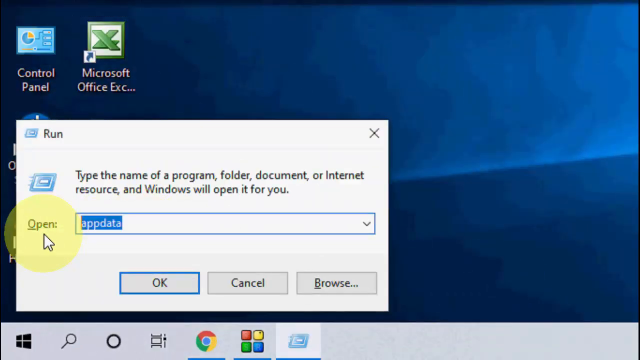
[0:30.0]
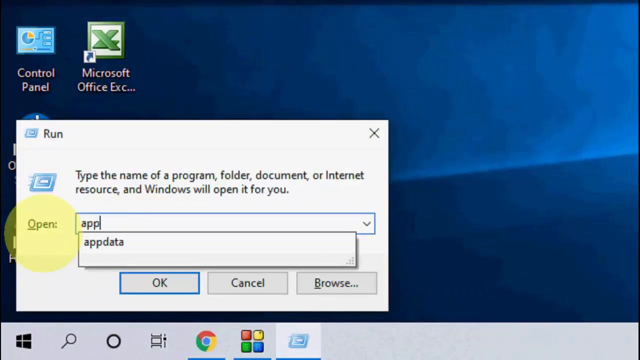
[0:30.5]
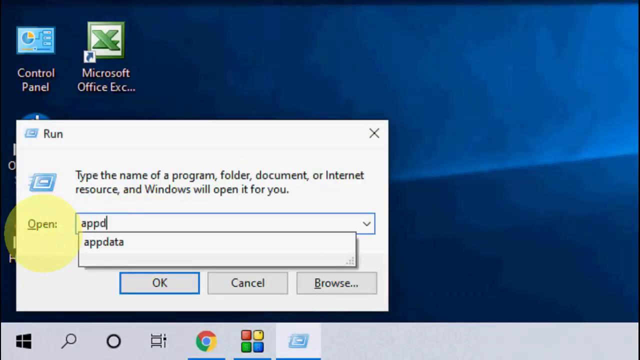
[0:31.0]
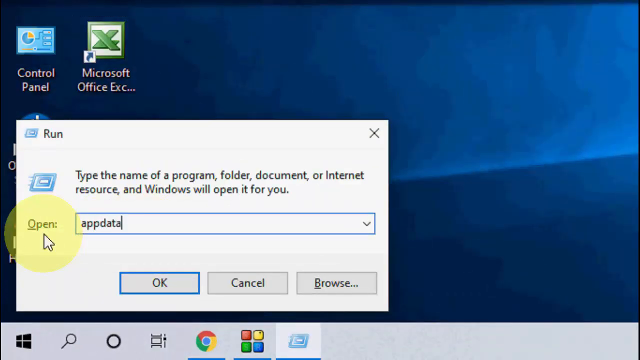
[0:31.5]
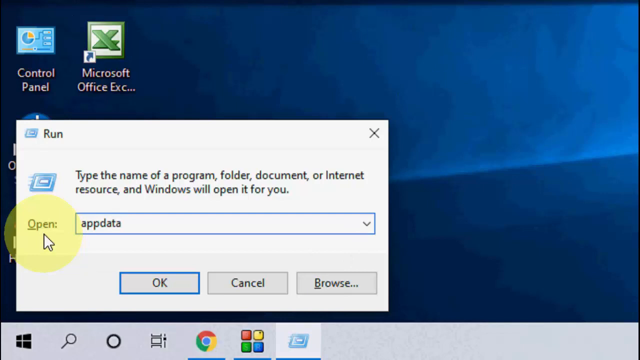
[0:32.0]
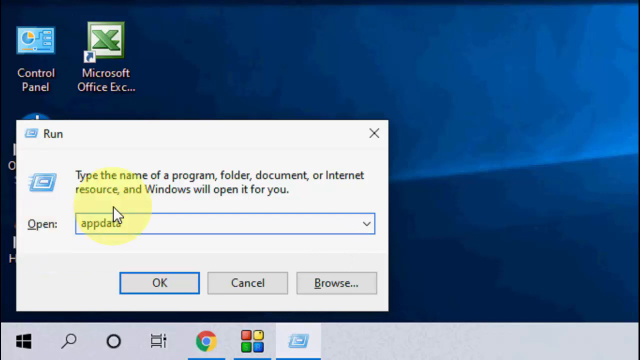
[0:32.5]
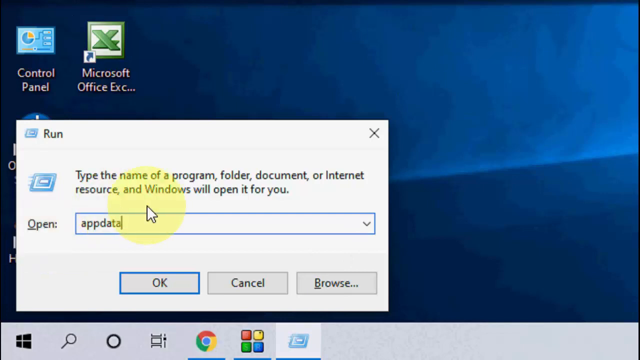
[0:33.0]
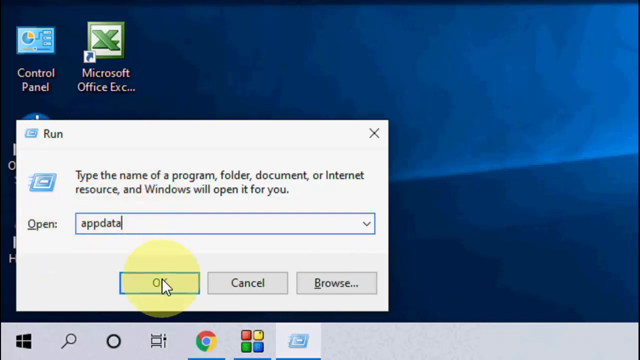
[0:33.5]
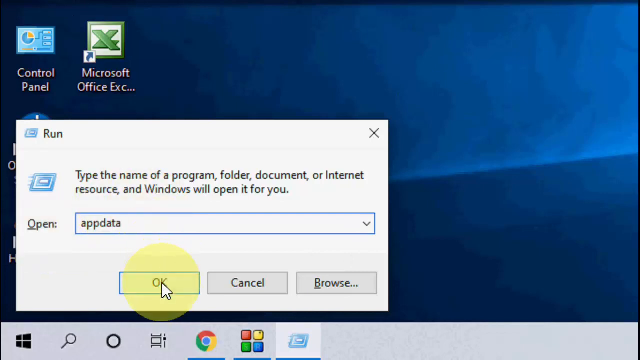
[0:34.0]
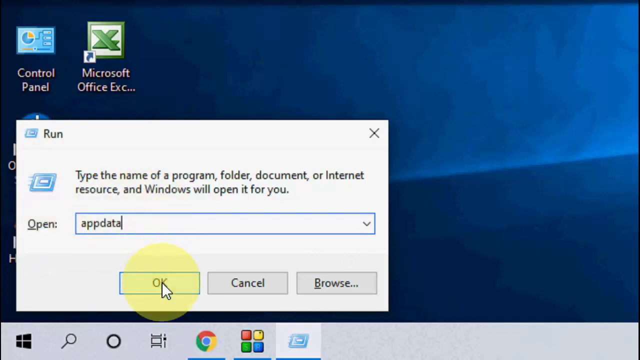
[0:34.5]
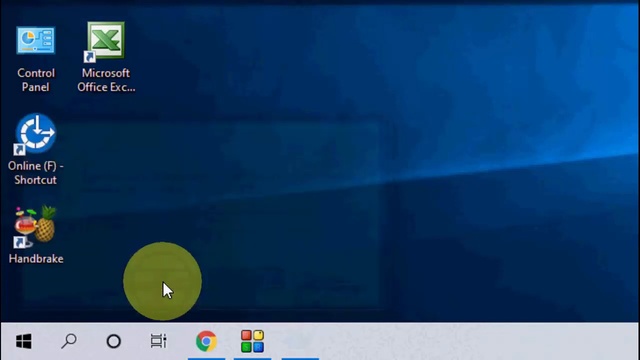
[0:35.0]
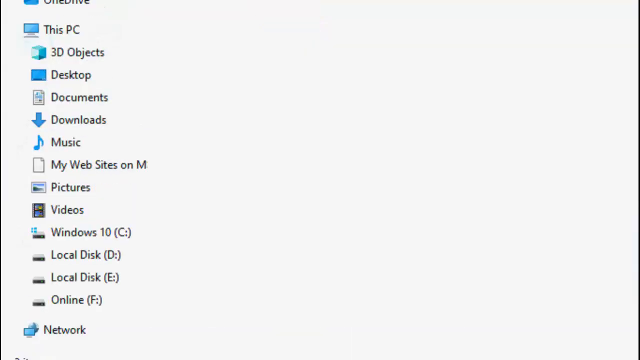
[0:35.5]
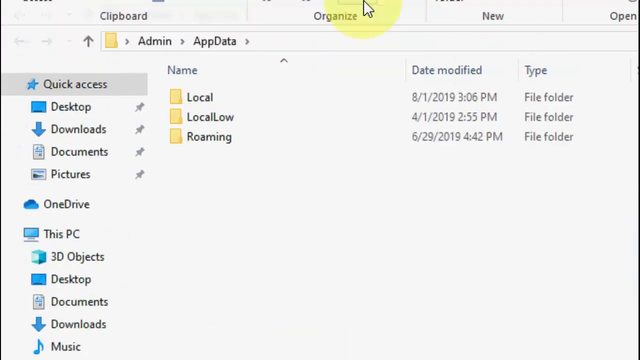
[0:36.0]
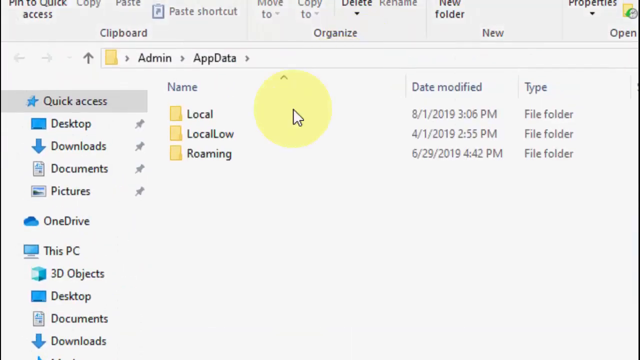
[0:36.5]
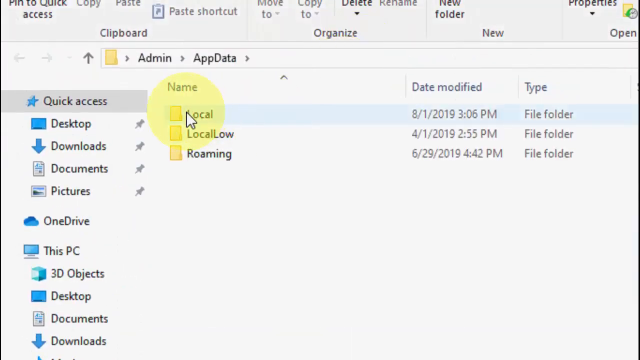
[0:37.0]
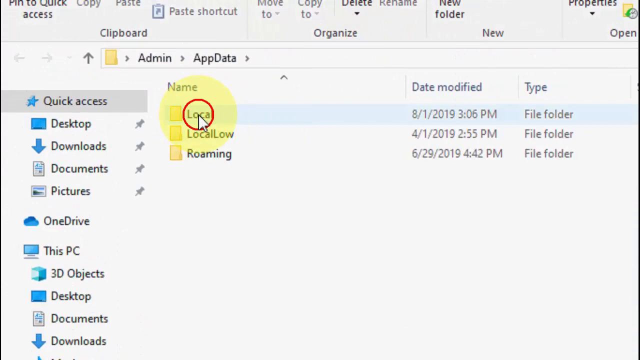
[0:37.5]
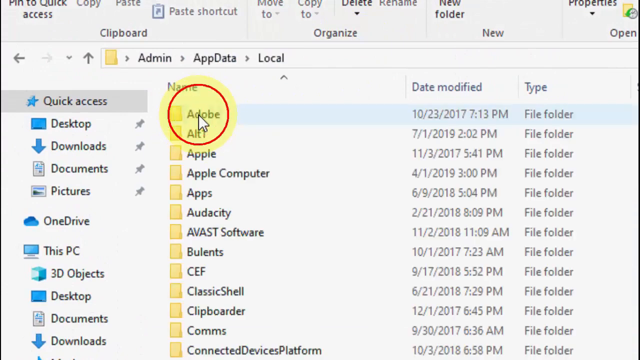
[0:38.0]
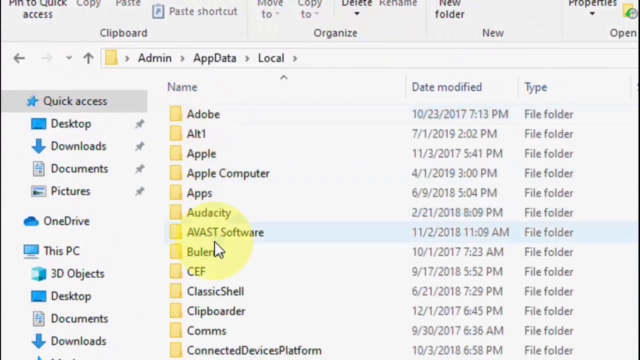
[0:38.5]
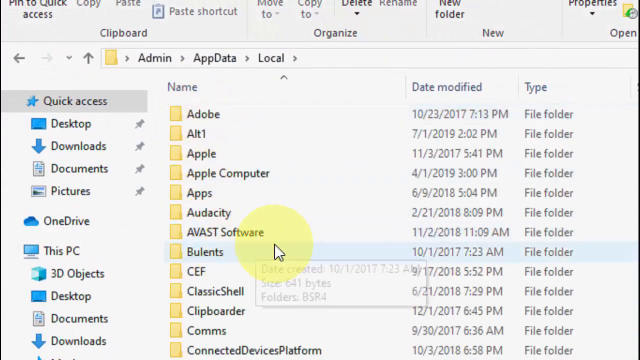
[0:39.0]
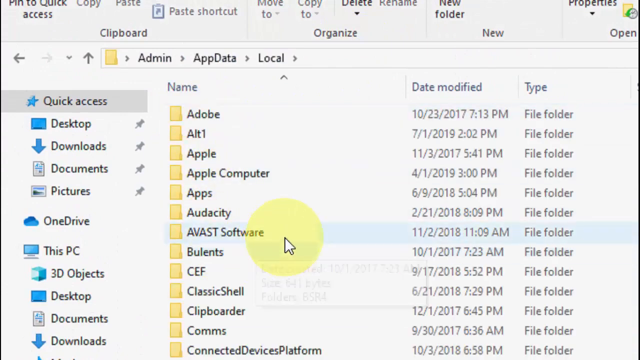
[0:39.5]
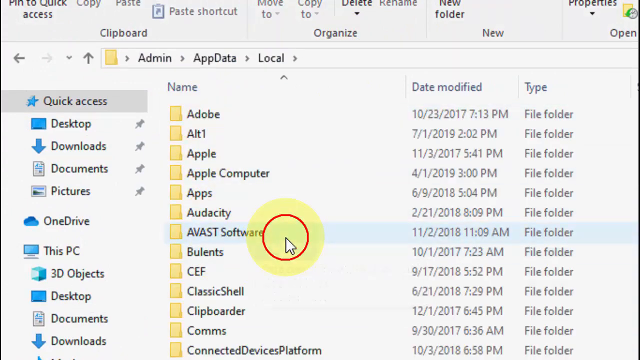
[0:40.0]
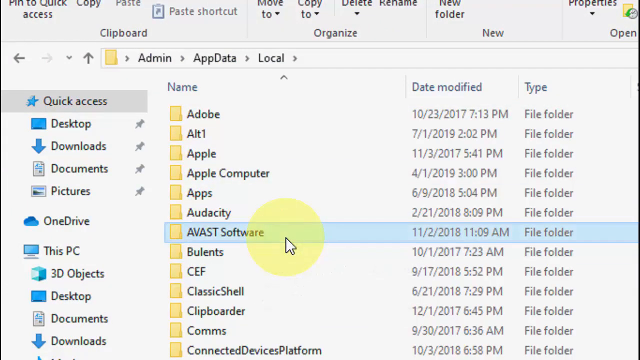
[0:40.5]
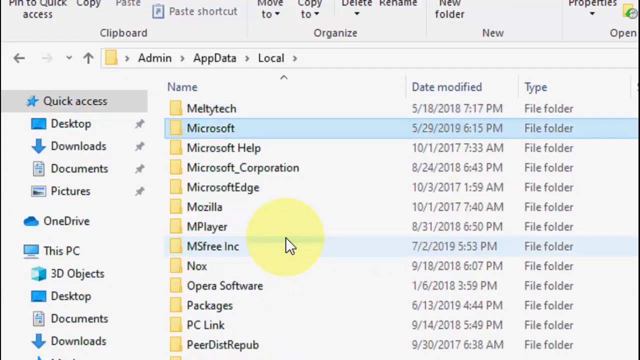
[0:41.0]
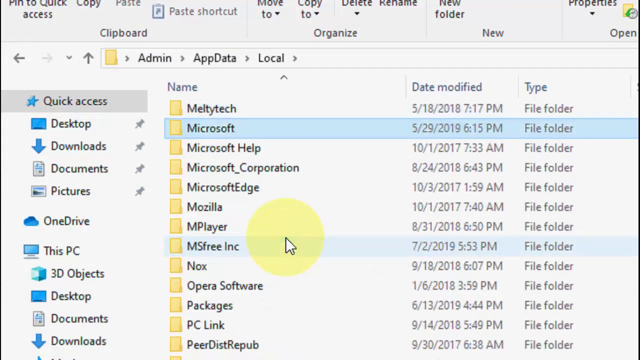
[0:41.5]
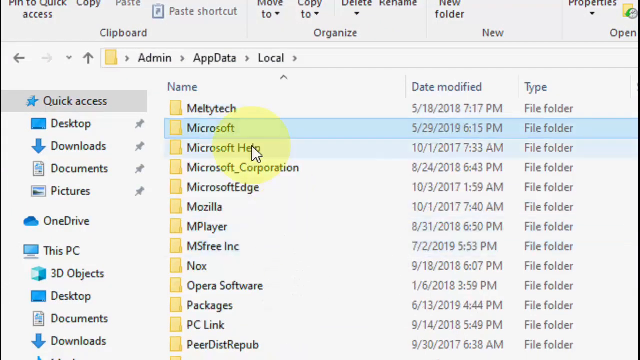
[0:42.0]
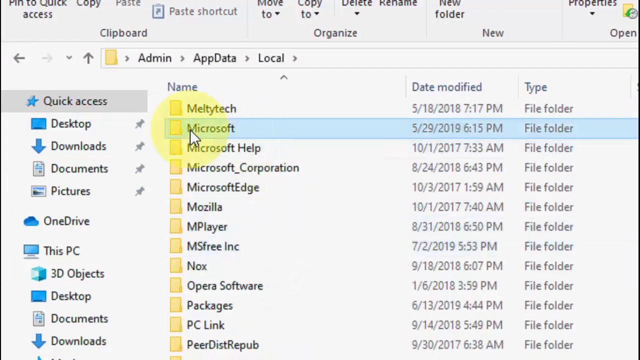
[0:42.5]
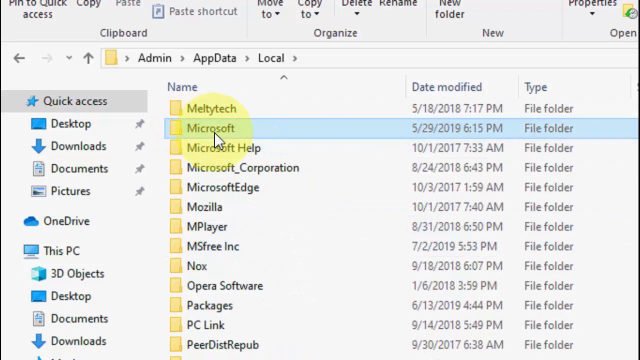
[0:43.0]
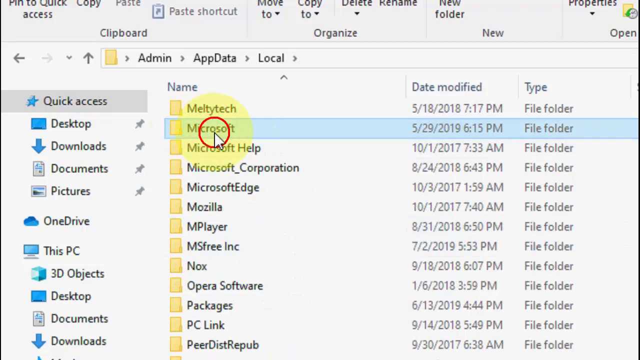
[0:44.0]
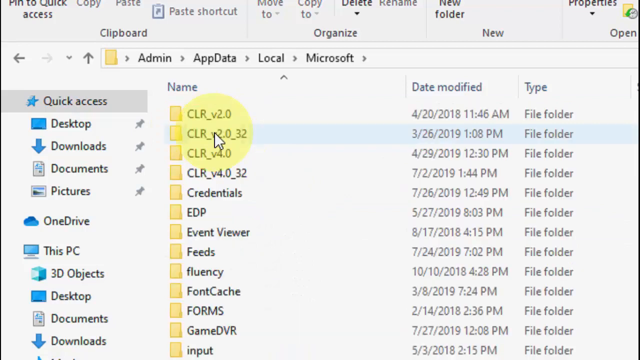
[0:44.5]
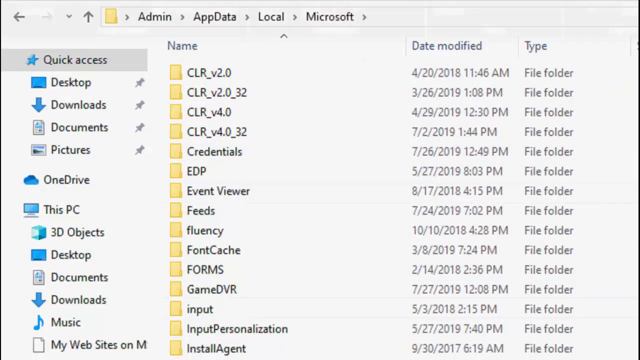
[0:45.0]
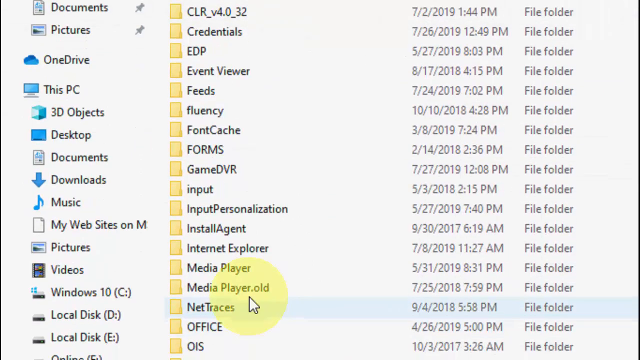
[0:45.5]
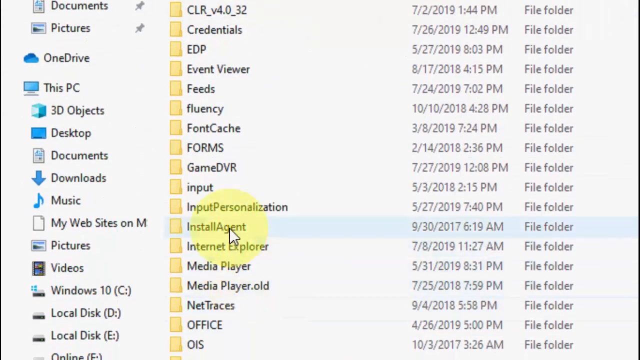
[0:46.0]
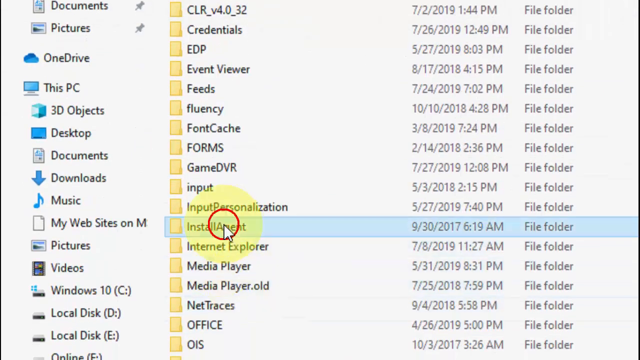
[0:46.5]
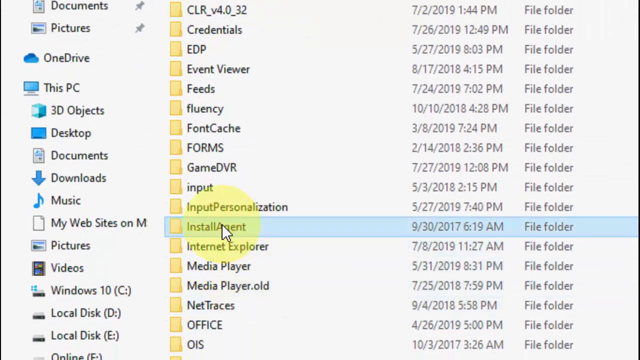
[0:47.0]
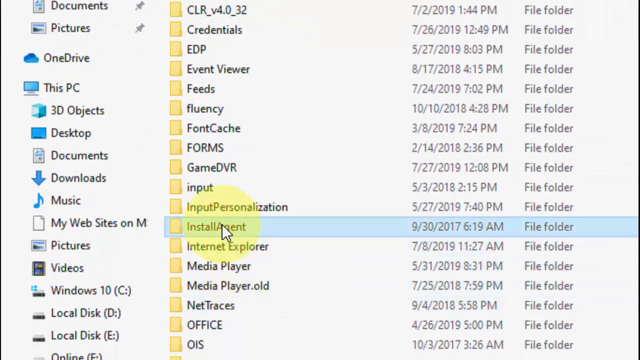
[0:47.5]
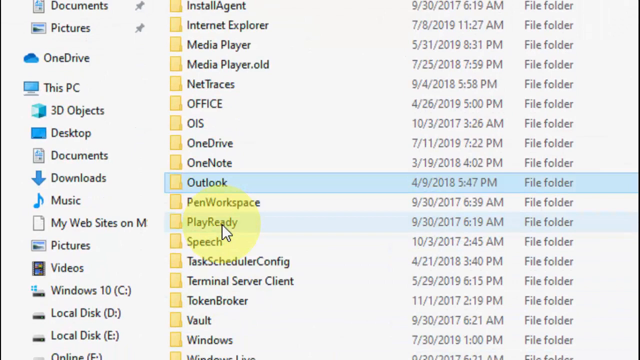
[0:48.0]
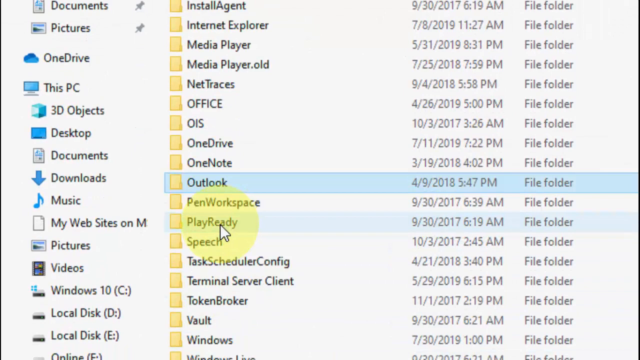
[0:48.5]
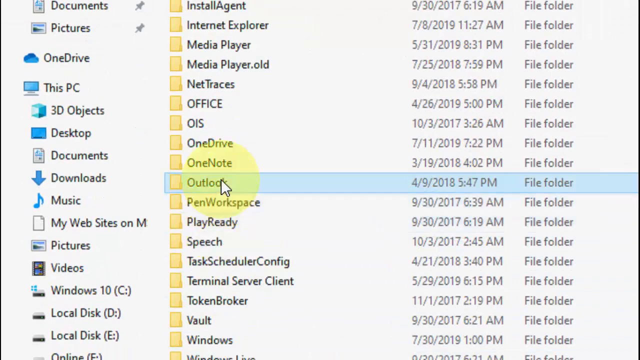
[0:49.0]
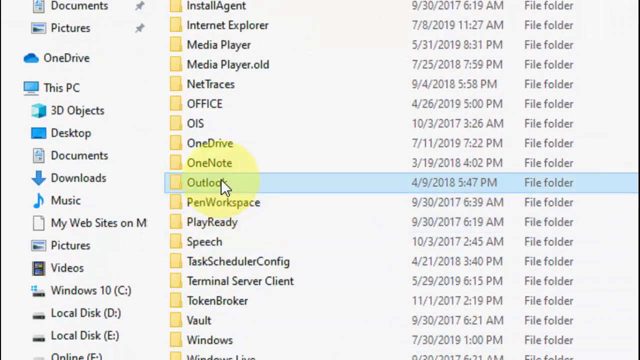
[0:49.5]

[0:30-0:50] A window screen shows the run box with "app data" in the part where text is typed. The mouse highlights where it says "open", then moves to "okay" and selects it. It goes to the app data folder and highlights the local folder, then clicks it. It goes down to Avast software and clicks it, which brings up more folders, and it highlights Microsoft. It clicks Microsoft, scrolls down the page, goes to install agents and clicks it, then clicks Outlook. A yellow highlighter surrounds the mouse icon, and as it does each step it also highlights the surrounding files. The file being clicked is identifiable because the mouse icon is on that specific file, pointing at it.